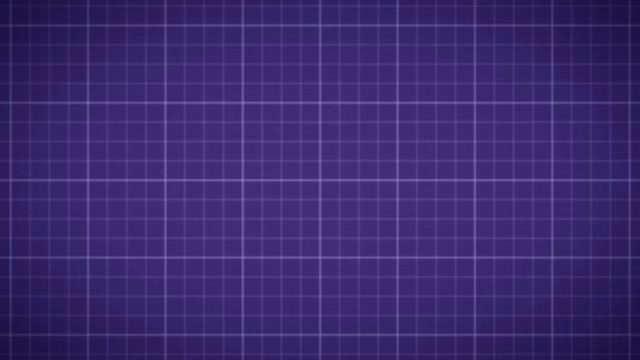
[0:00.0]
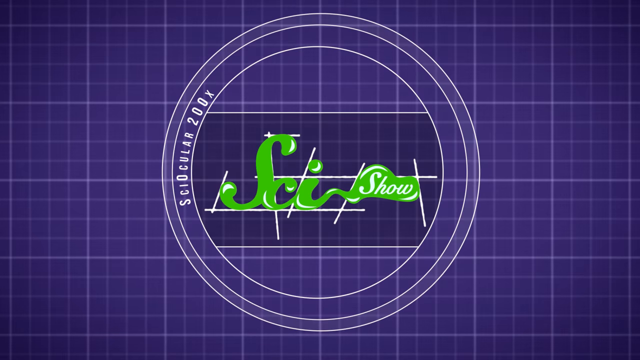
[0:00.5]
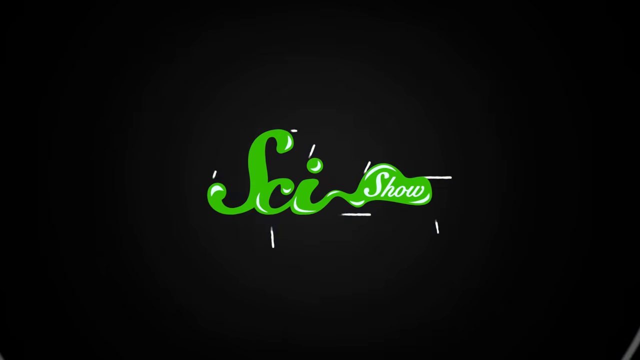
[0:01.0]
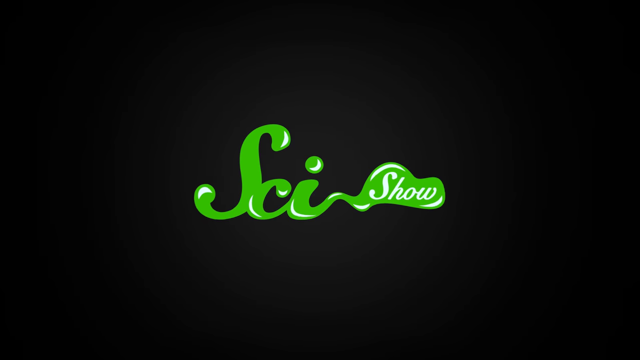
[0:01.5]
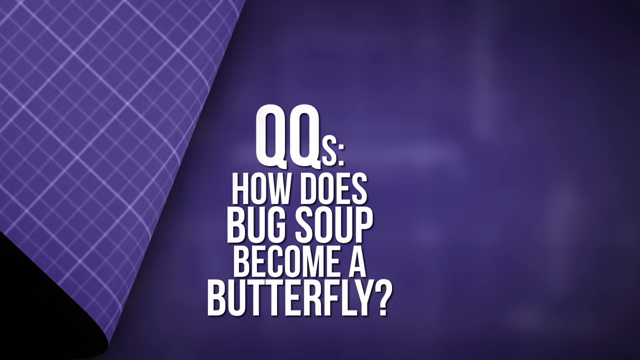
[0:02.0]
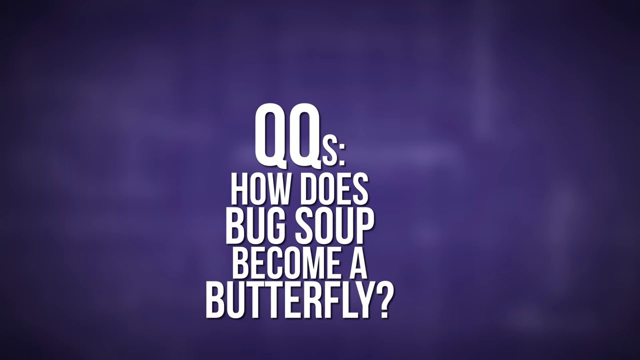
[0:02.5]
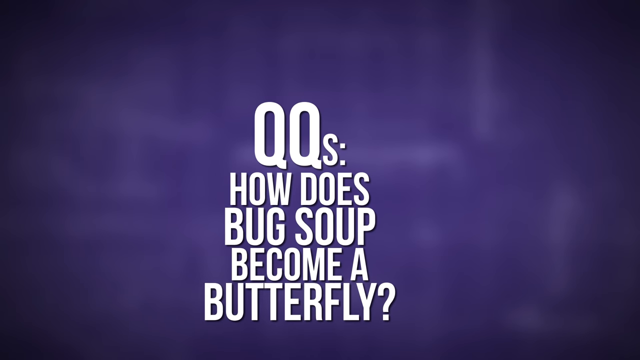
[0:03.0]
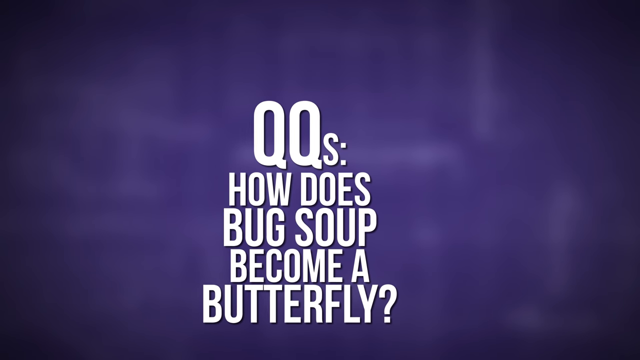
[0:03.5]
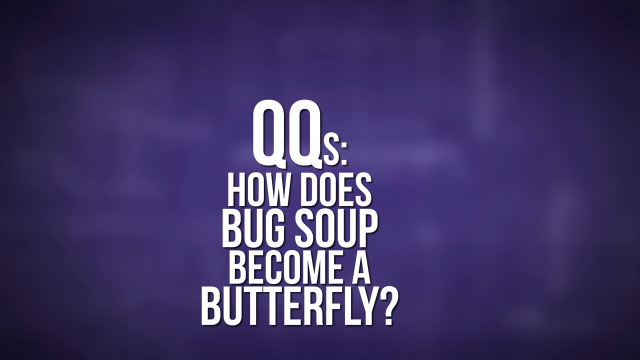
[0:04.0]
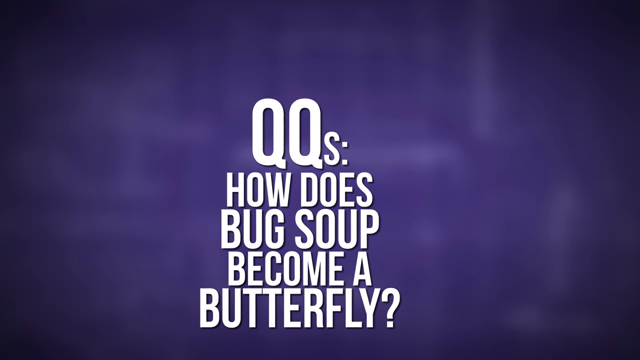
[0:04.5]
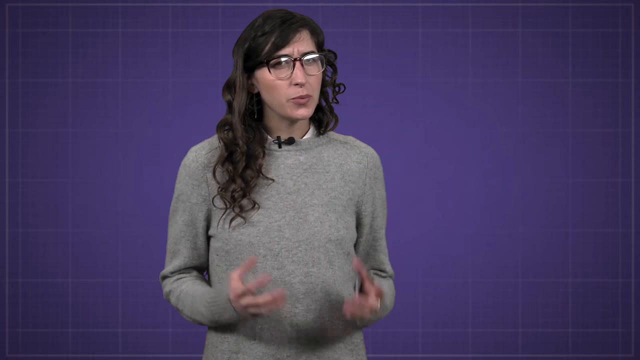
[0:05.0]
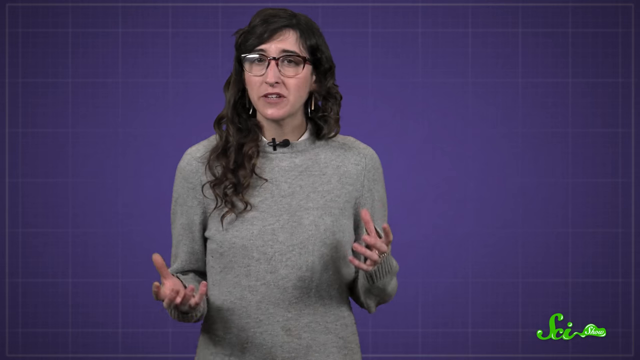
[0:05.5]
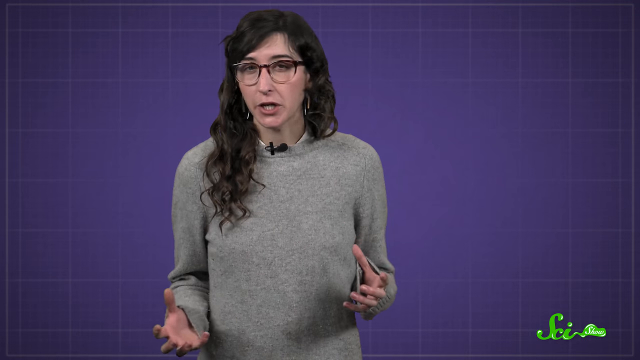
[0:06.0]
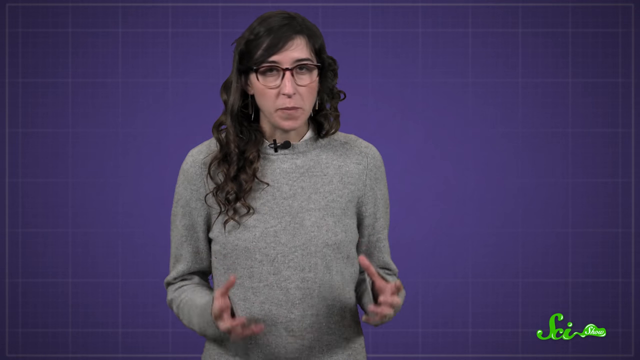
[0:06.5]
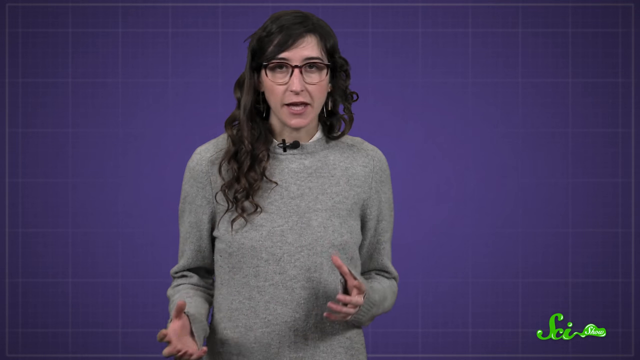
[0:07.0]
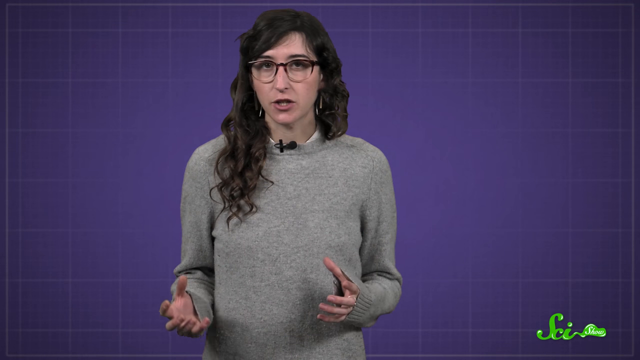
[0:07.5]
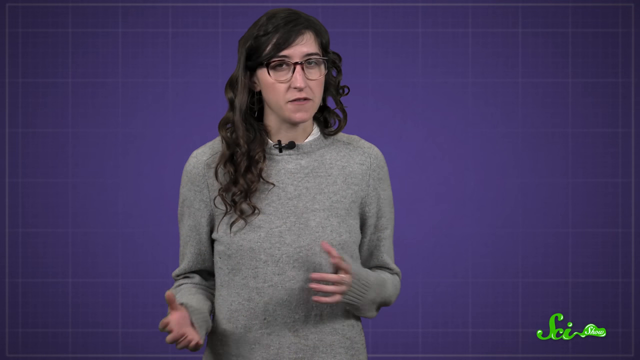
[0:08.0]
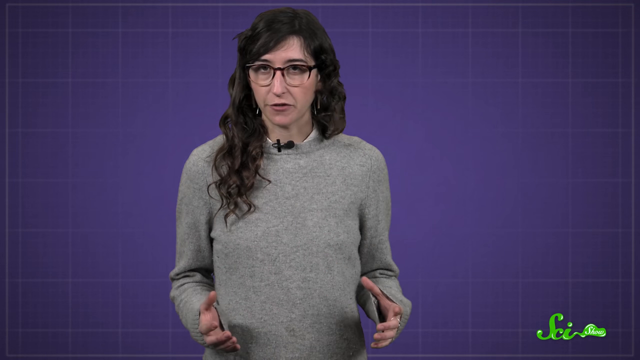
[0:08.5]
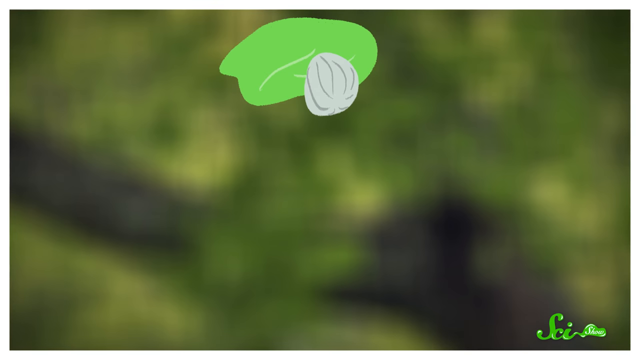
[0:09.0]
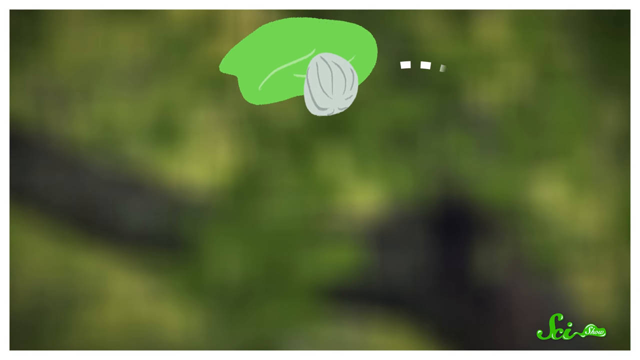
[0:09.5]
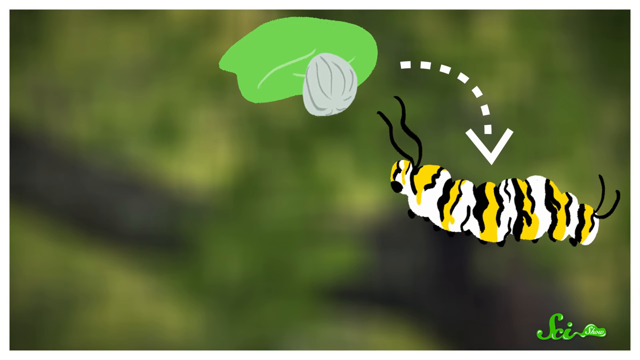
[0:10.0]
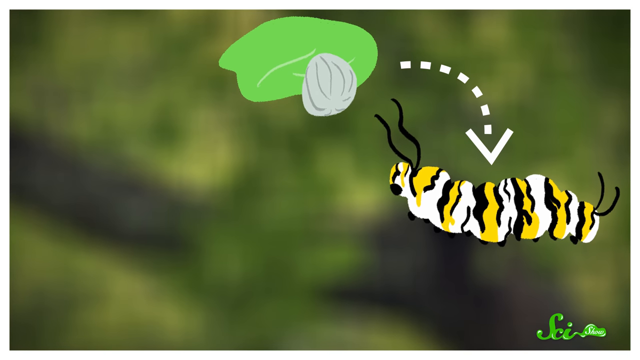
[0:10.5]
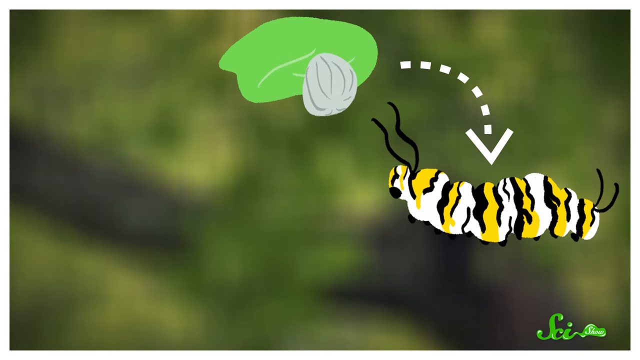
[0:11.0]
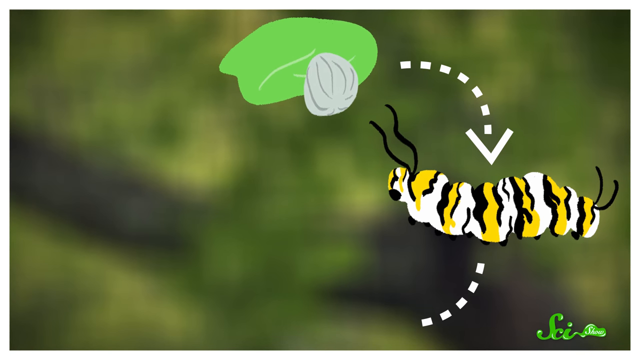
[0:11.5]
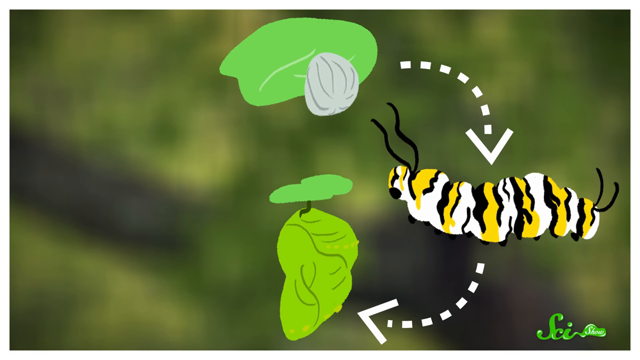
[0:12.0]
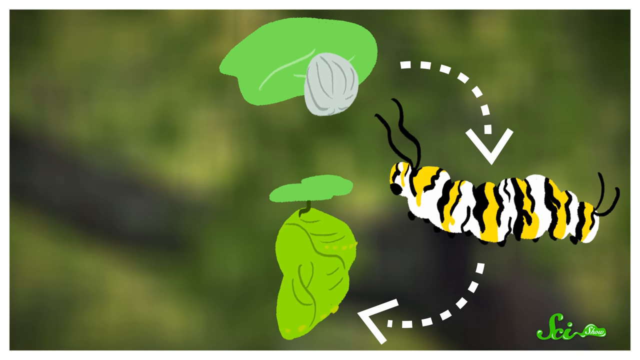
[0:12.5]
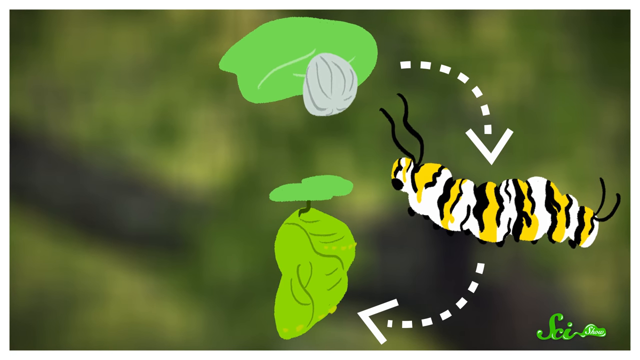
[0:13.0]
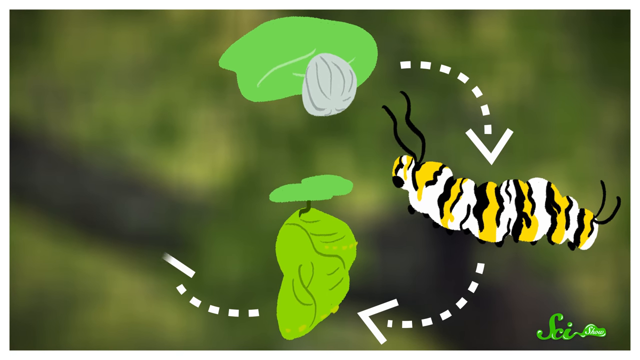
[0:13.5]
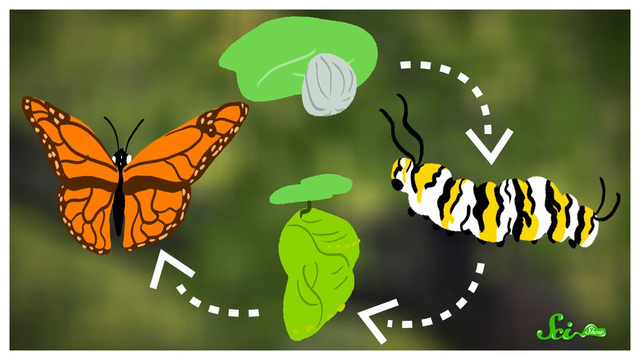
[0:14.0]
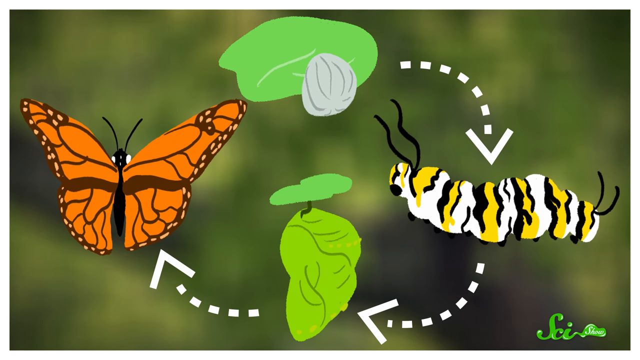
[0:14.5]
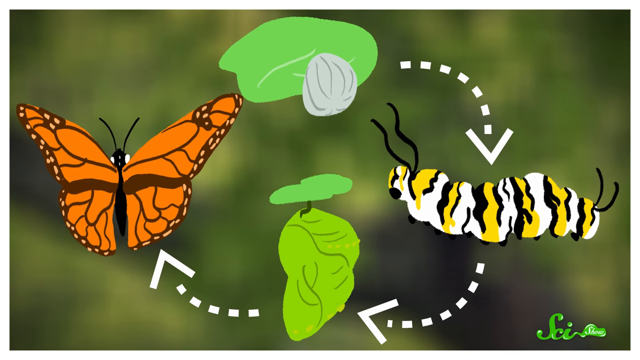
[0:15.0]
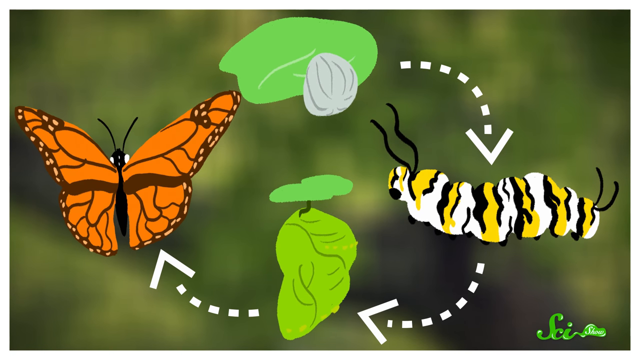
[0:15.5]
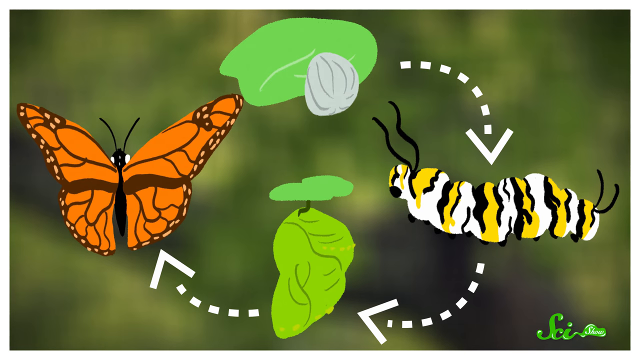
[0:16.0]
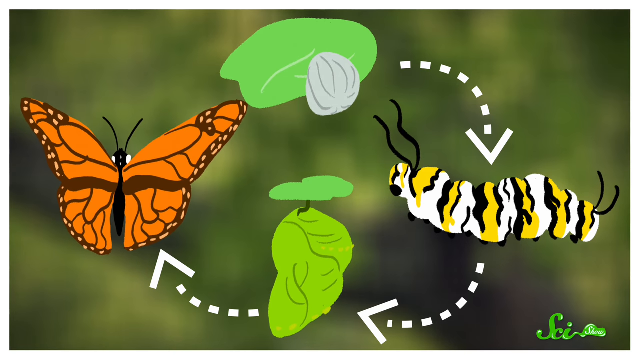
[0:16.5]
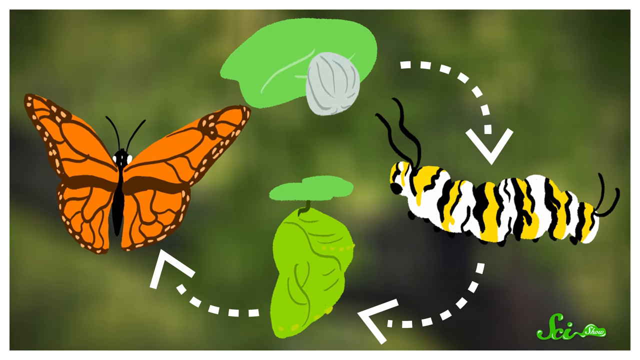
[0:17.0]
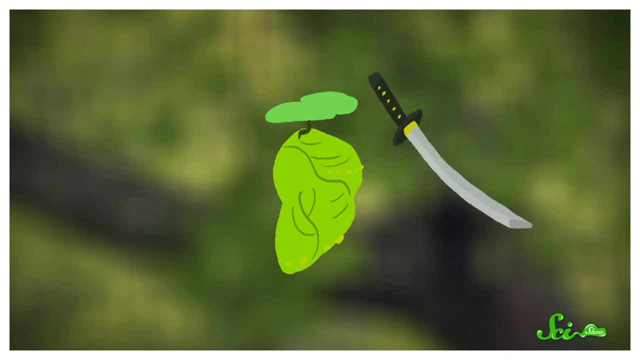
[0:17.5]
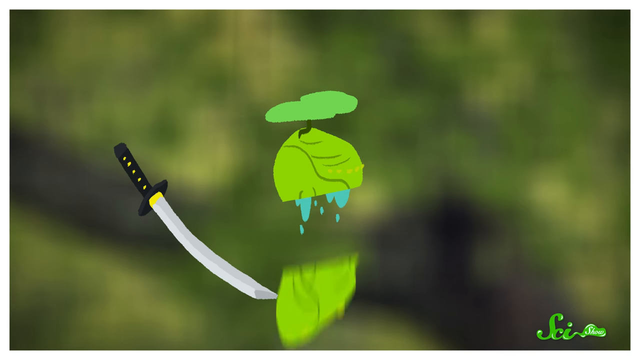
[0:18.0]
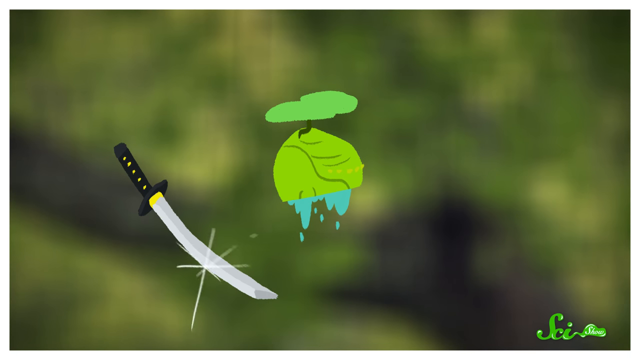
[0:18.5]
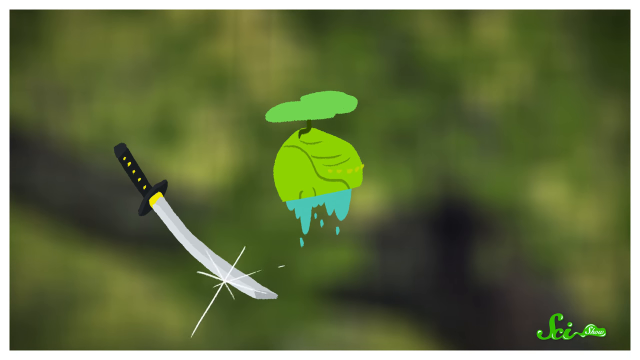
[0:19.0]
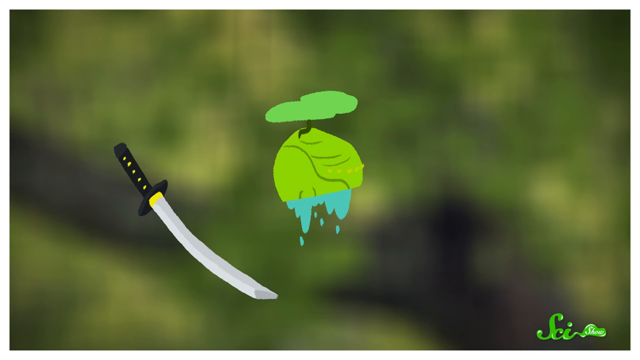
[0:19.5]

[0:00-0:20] The video opens on a purplish grid with light lines; each big square contains 12 little squares. It is SciShow, and the question "how does bug soup become a butterfly?" is shown. A girl is talking. She has long, dark brown hair and glasses, and wears a kind of tan, long-sleeved sweater, with a microphone visible right at her neckline. The life cycle of a caterpillar is shown: it hatches, goes into a cocoon, and turns into a butterfly. A knife is then shown cutting something.